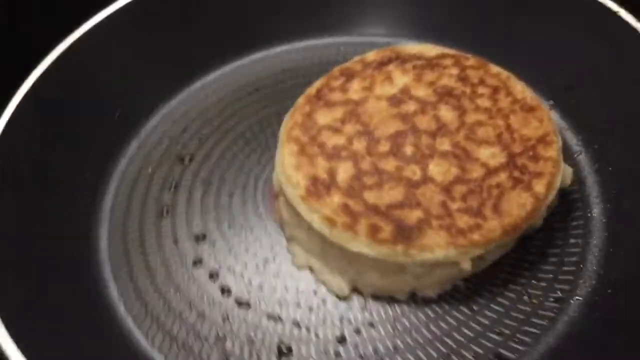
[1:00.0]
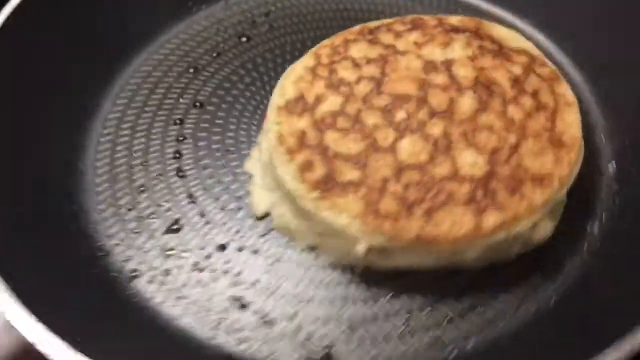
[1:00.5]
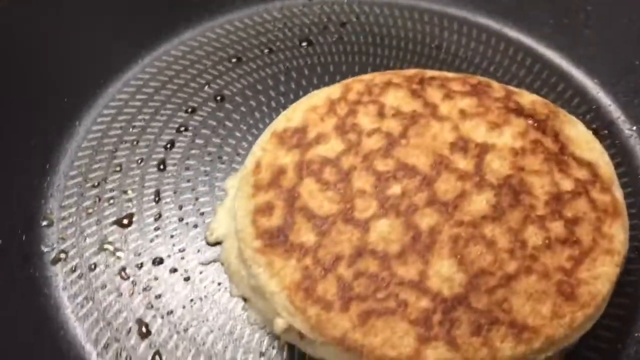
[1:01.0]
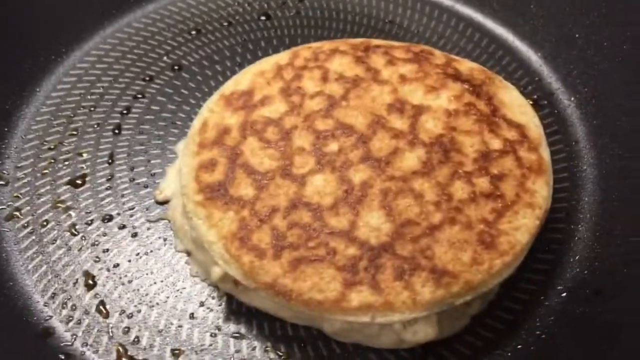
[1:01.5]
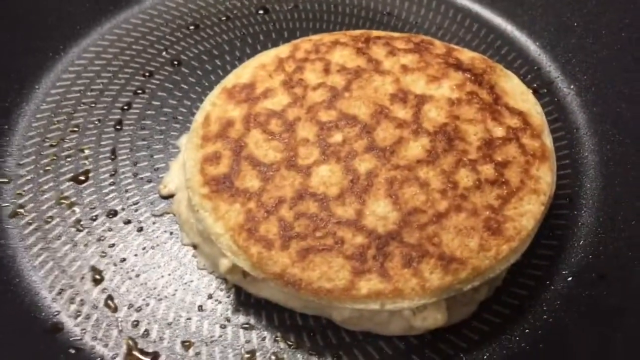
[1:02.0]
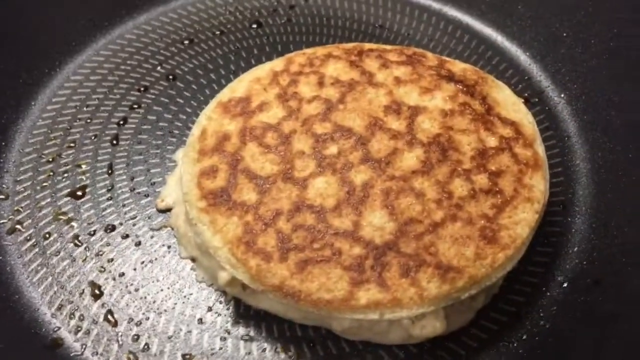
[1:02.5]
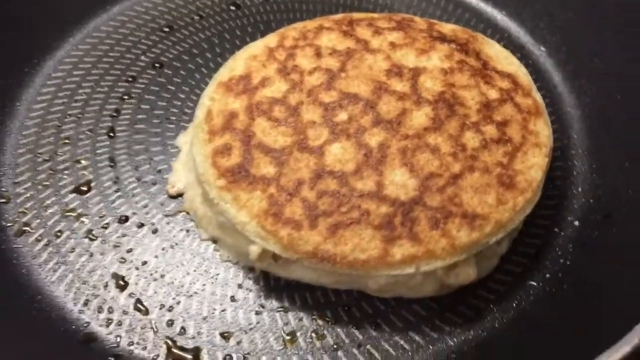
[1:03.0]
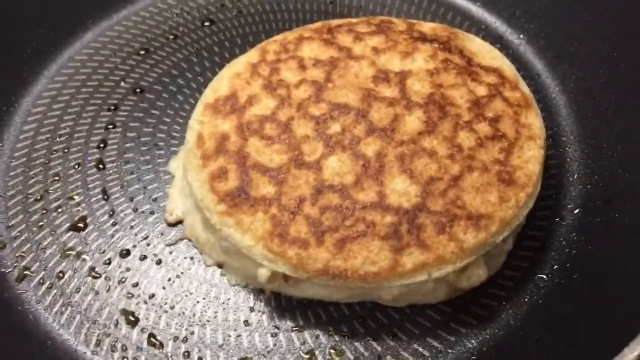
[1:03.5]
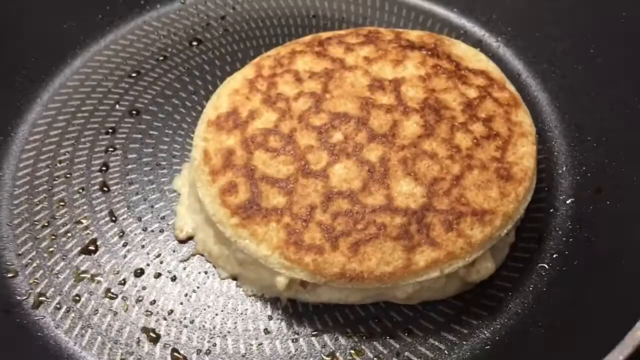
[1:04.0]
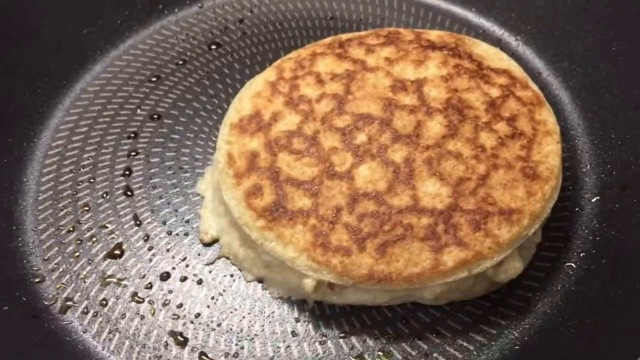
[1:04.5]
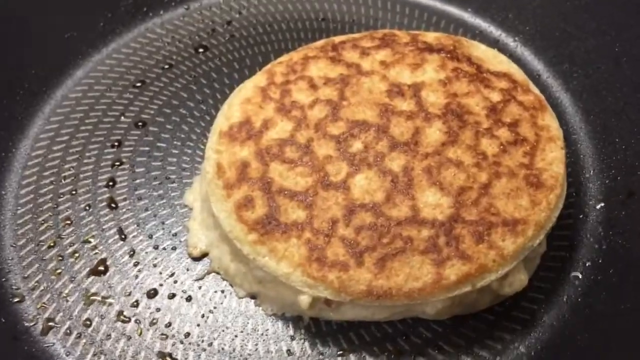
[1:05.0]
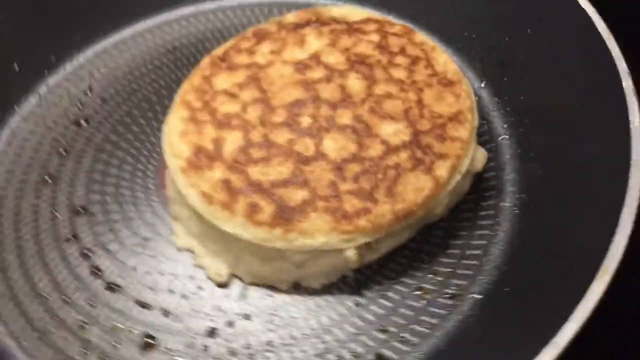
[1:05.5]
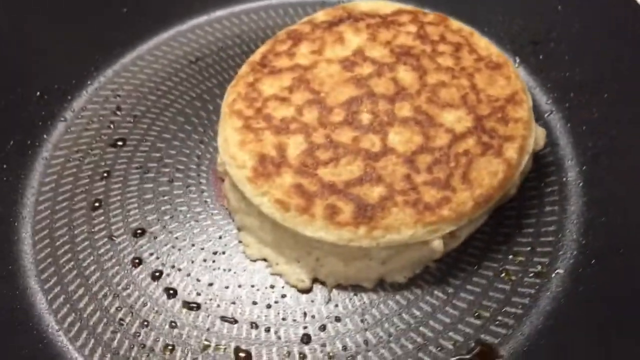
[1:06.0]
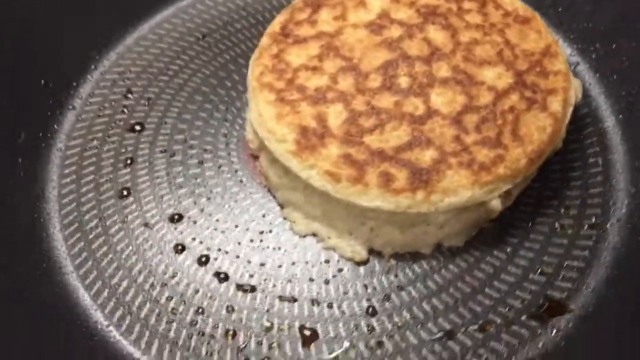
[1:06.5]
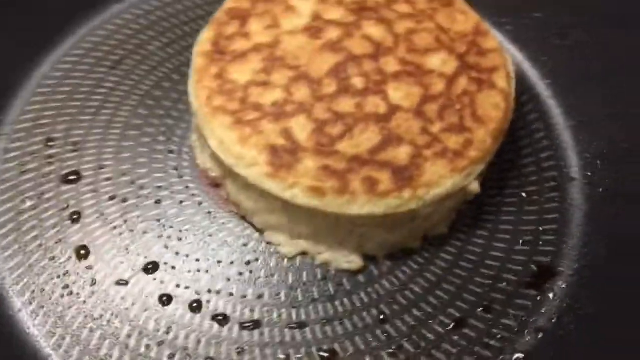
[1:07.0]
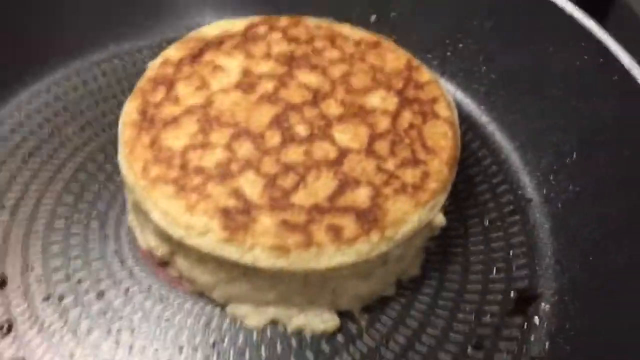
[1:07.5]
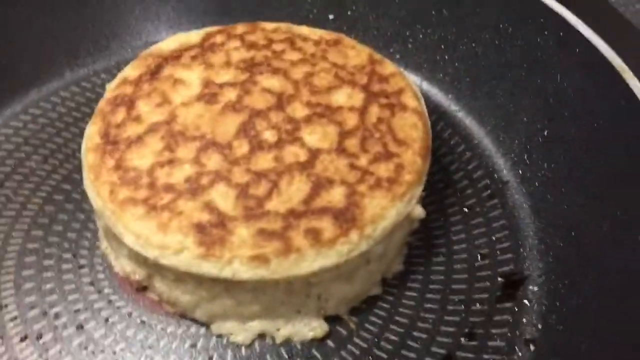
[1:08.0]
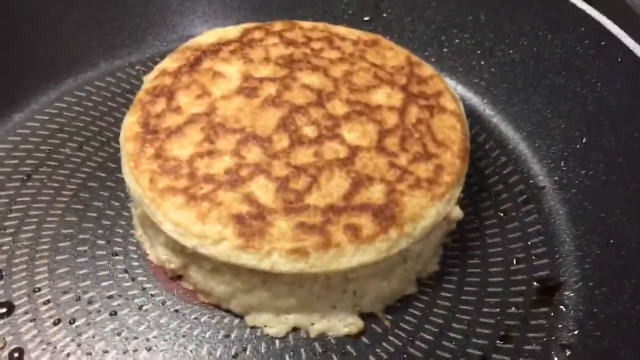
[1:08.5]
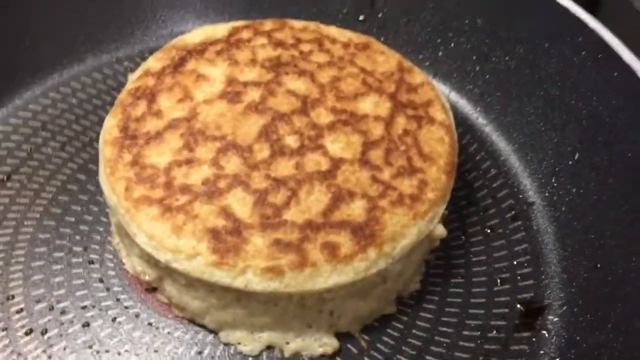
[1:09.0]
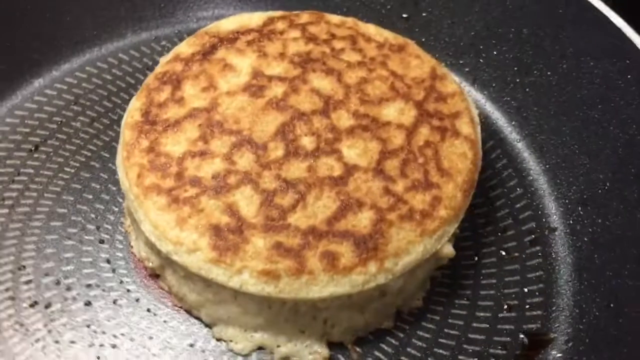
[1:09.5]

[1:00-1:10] A close-up shows the large round black pan with small dashed lines all over the bottom. In the middle of the pan, towards the right, is a large round pancake that looks to be about an inch tall, golden tan on top with some brown markings from cooking. The person slowly rotates the pan so the pancake can be seen from all sides. It is circular, although on some sides some of the inner dough is kind of spilling out of the circular shape.